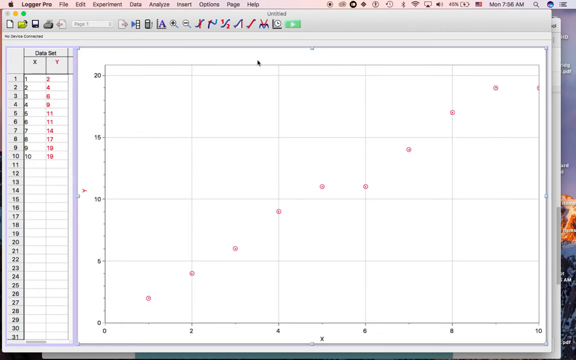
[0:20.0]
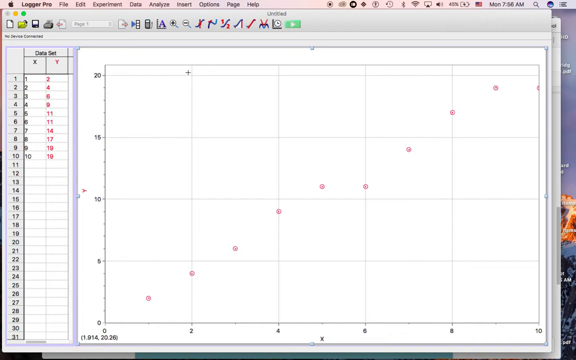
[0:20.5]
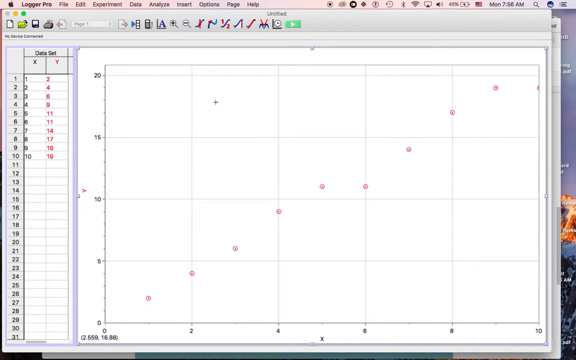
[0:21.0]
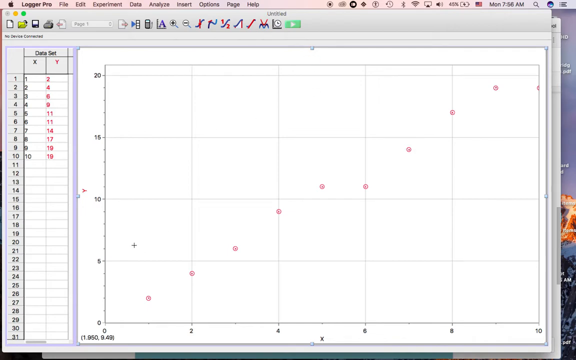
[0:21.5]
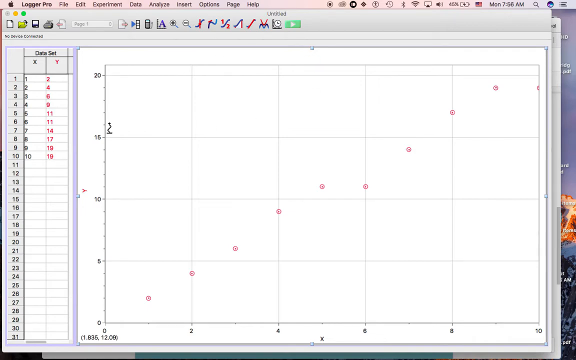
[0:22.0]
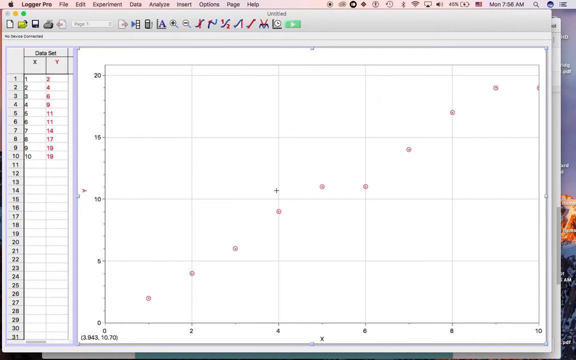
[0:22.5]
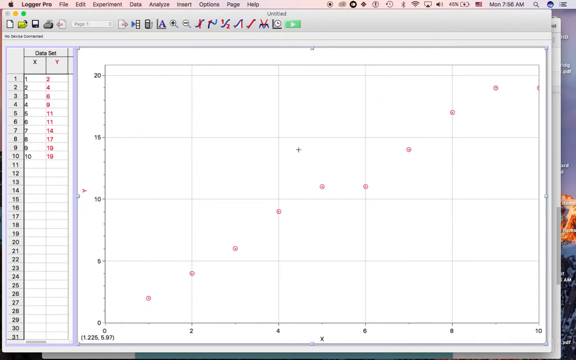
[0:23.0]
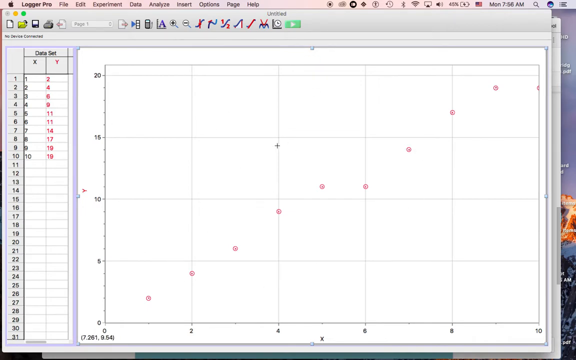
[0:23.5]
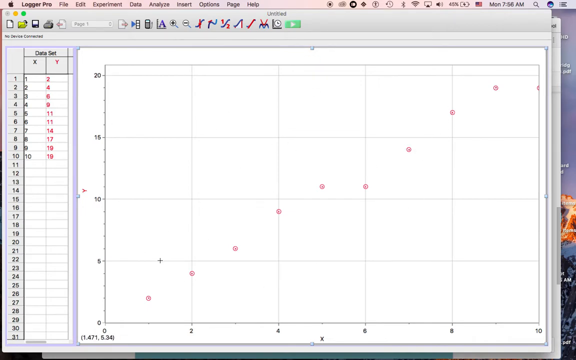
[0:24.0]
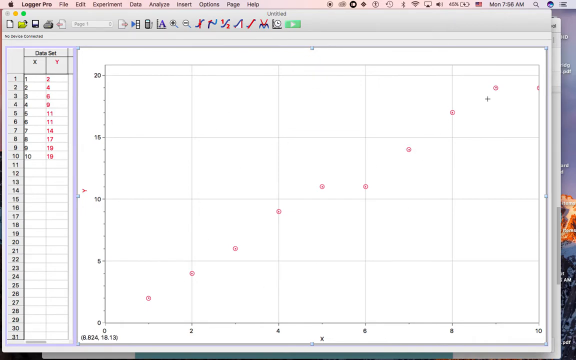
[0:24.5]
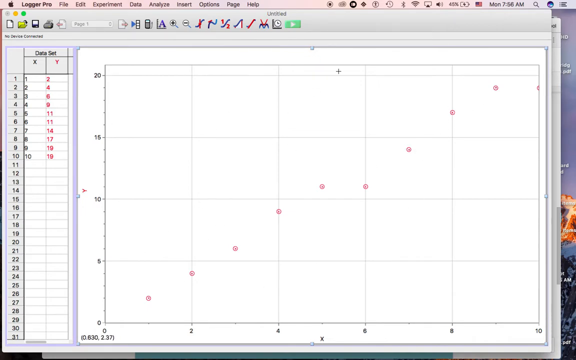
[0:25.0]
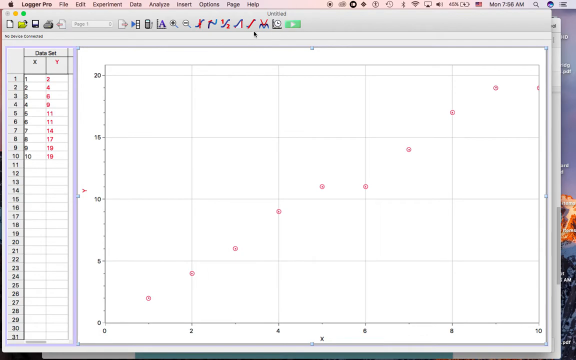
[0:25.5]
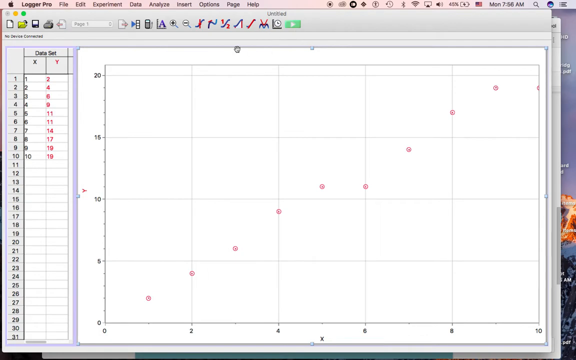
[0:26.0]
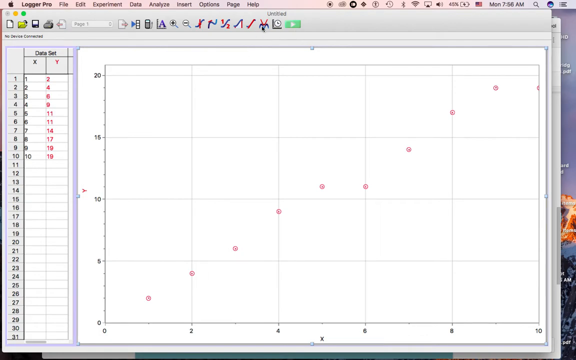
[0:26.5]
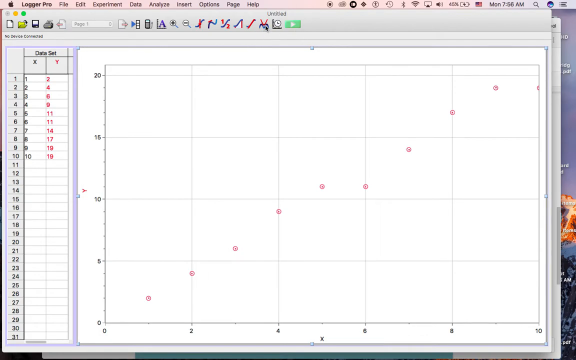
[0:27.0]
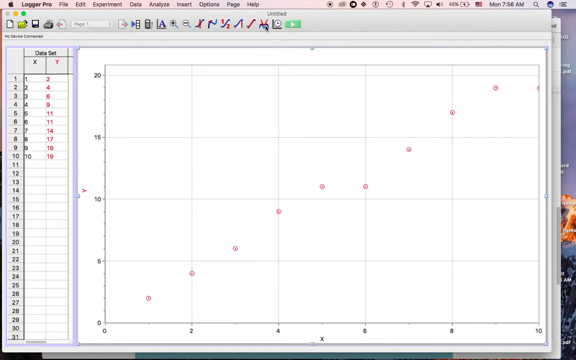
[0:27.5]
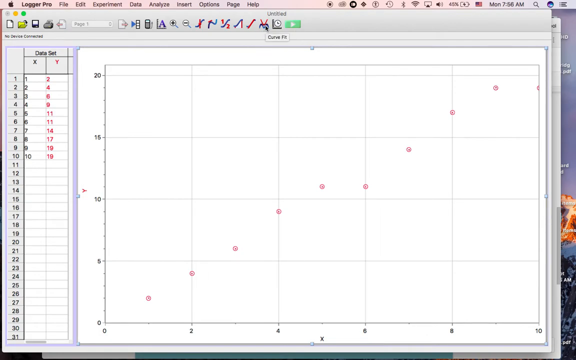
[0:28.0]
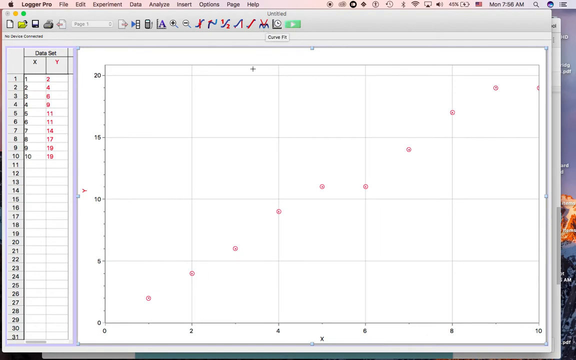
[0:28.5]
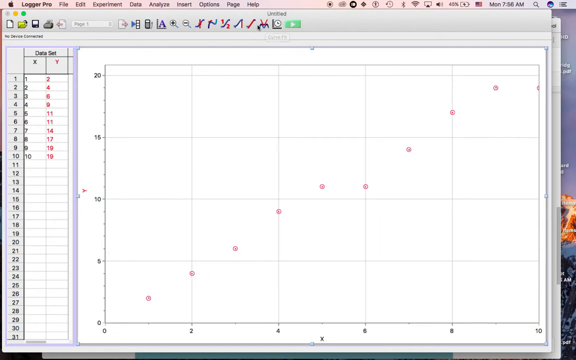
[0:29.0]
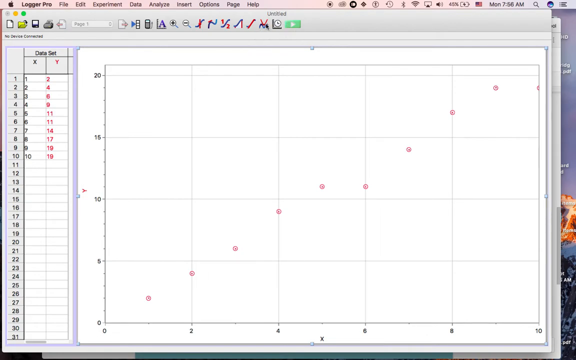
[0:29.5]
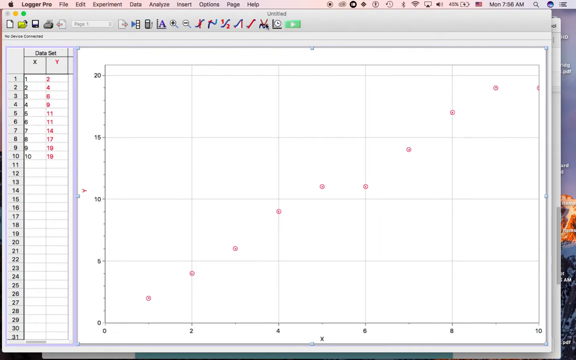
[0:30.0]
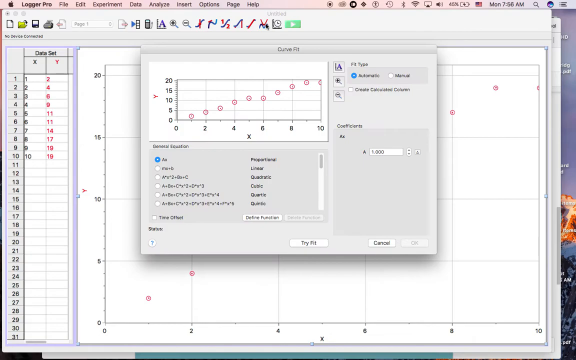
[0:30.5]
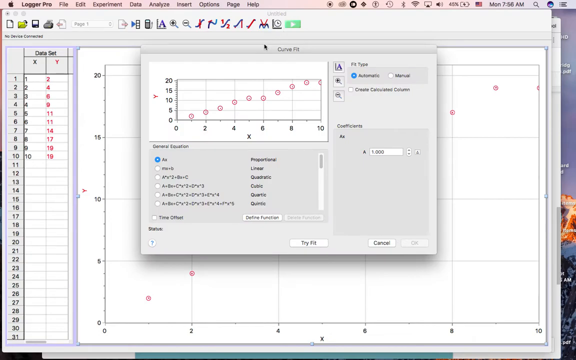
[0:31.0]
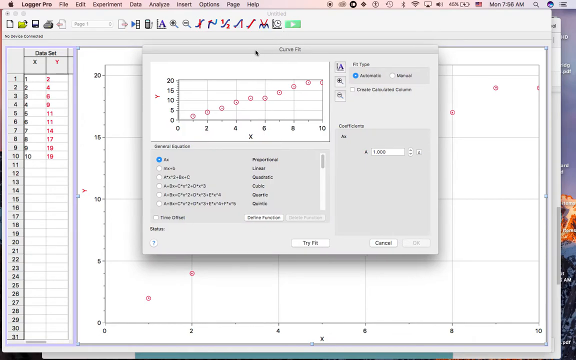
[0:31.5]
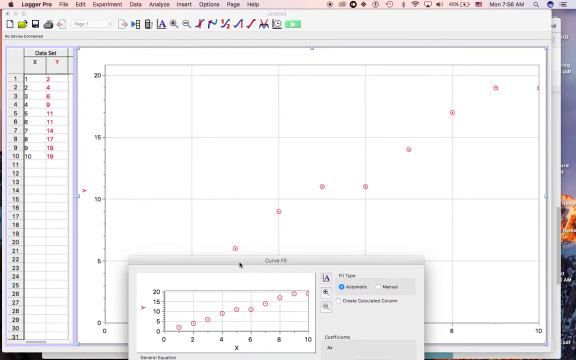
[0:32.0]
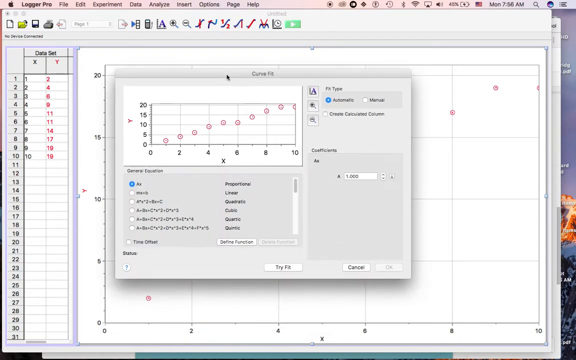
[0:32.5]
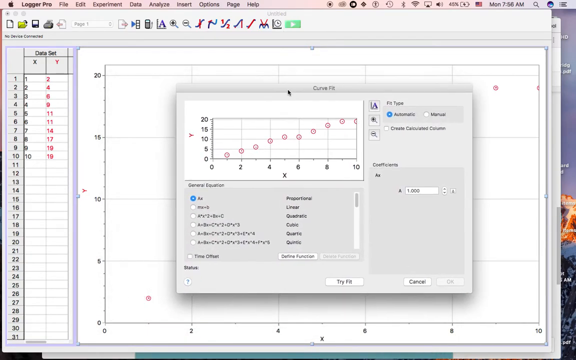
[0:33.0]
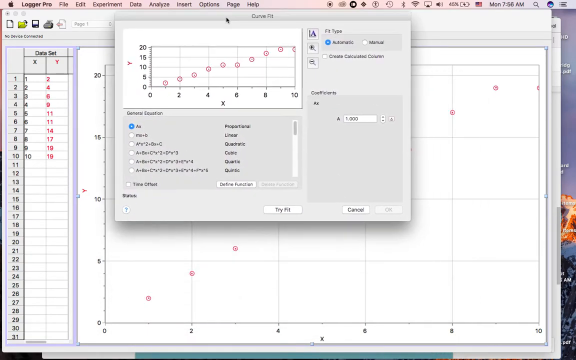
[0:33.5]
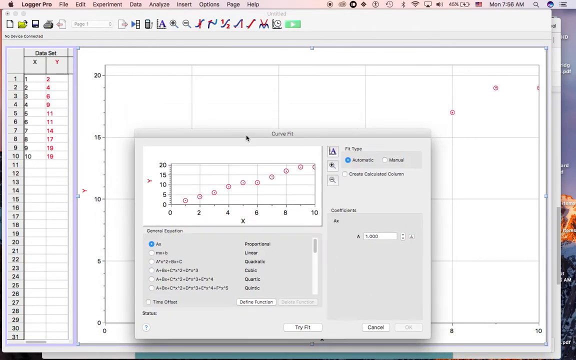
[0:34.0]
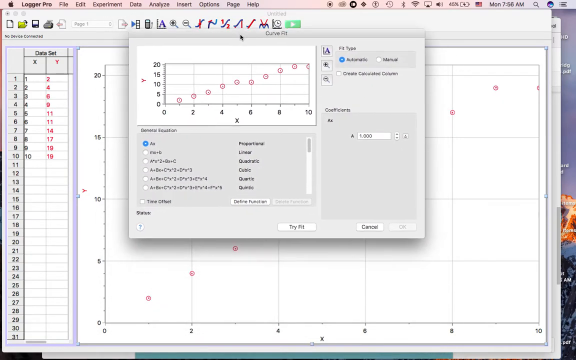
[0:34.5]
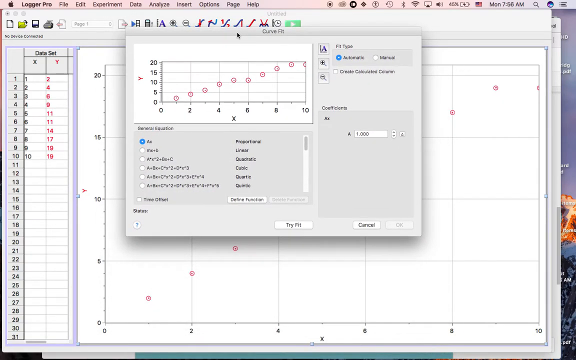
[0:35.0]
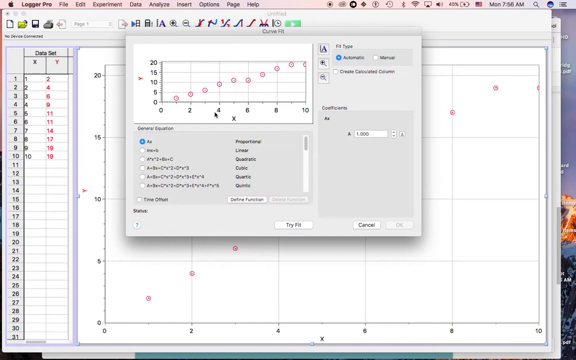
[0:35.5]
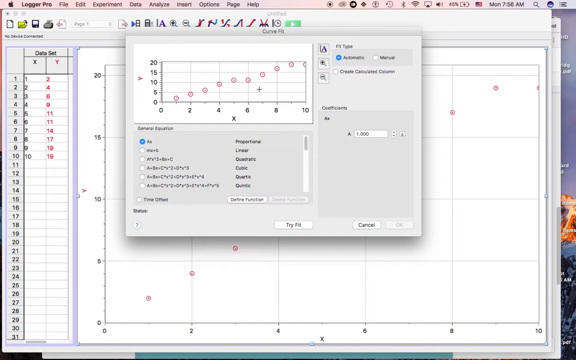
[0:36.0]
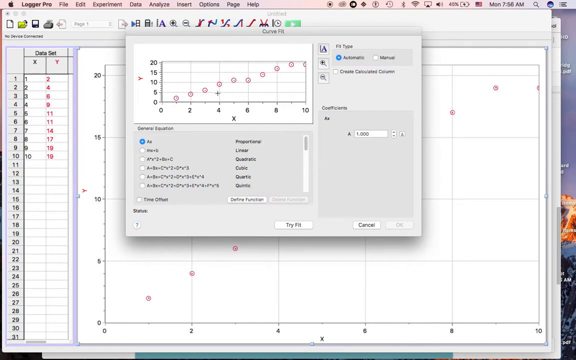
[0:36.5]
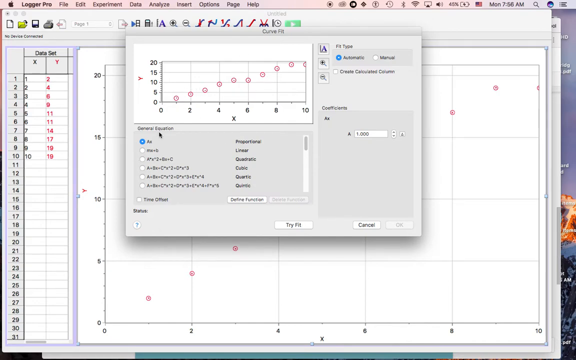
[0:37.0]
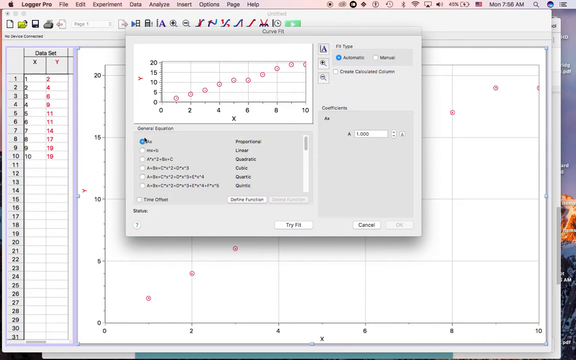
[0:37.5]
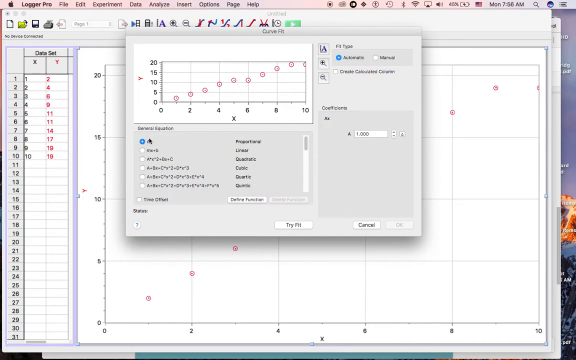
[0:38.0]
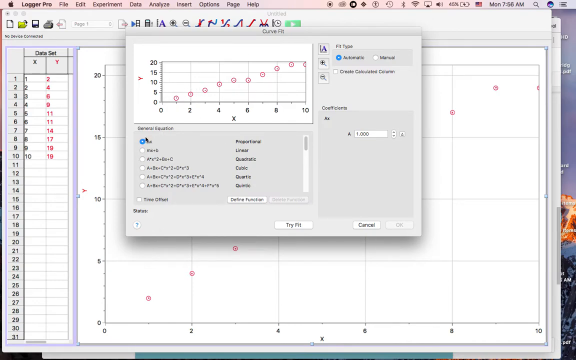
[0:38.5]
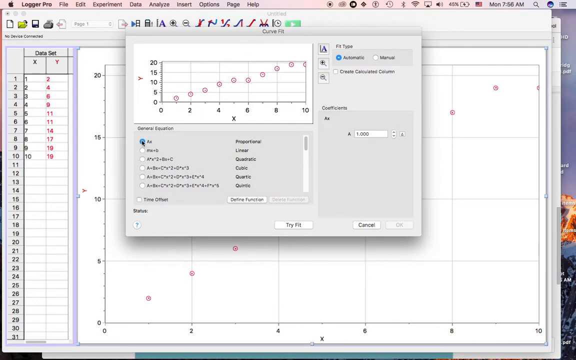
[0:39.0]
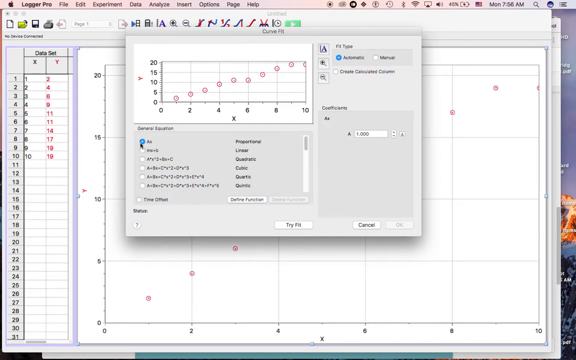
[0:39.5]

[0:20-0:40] The mouse pointer moves in a circular motion in the upper left area, goes down, makes another circle, and reaches the middle. It then moves around a lot very quickly, moves to the right side, and ends up in the upper left within the top settings area, under the word "Untitled". The pointer lands on a button that says "Curve Fit", and the user presses it. A small window opens in the middle, with the title "Curve Fit" at its top center and some equations toward the bottom. The pointer drags this window down, then up, down again, and up again. It then moves down to the general equation area of the window and hovers around the top, first selection, which is already marked with a blue circle.